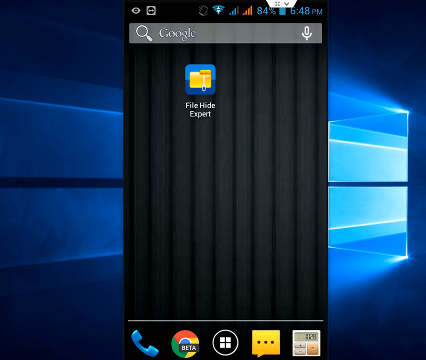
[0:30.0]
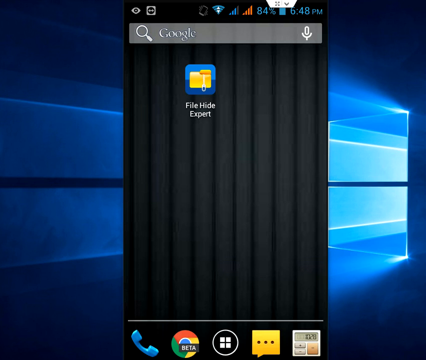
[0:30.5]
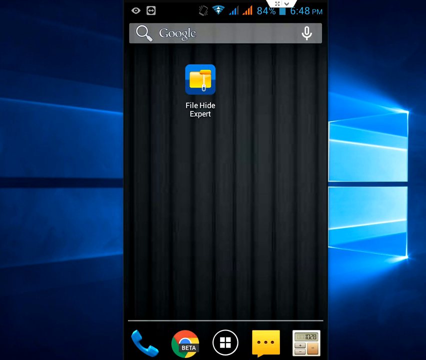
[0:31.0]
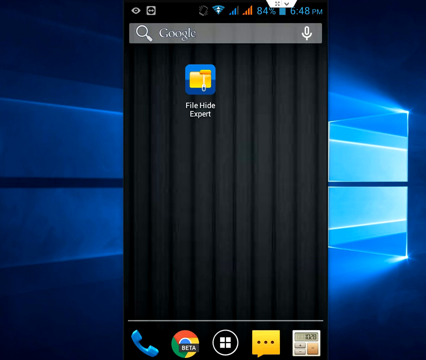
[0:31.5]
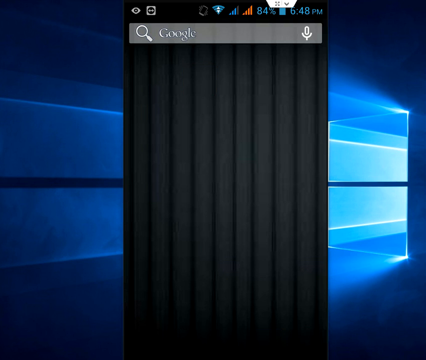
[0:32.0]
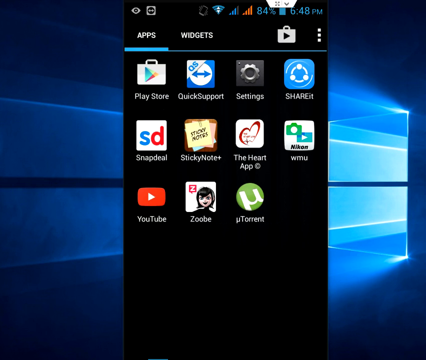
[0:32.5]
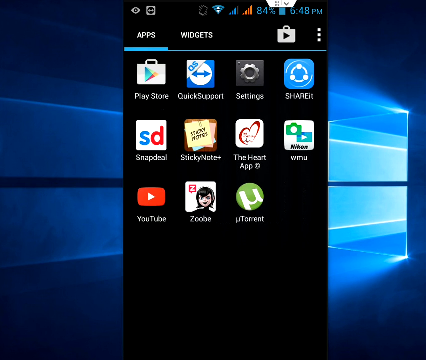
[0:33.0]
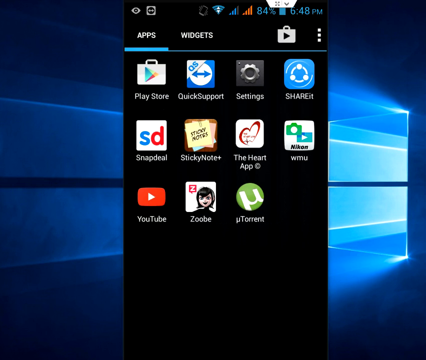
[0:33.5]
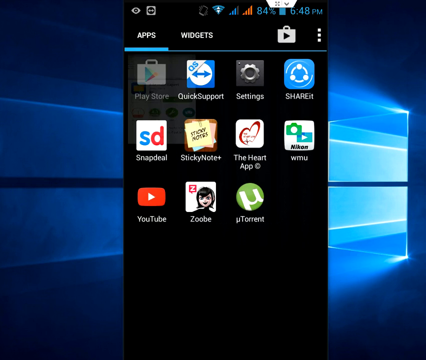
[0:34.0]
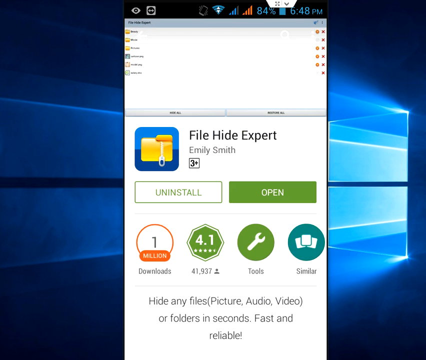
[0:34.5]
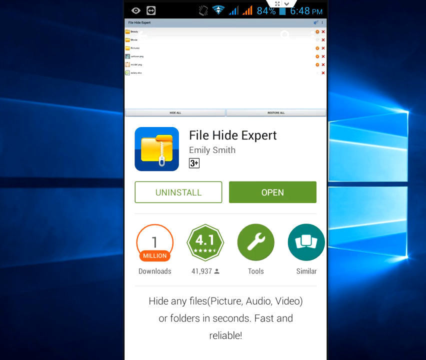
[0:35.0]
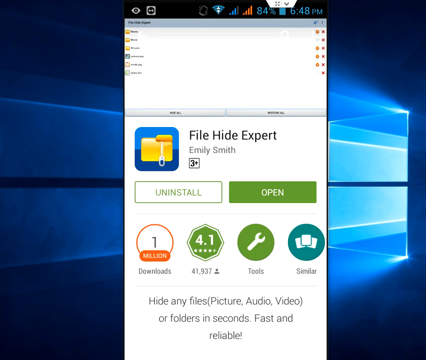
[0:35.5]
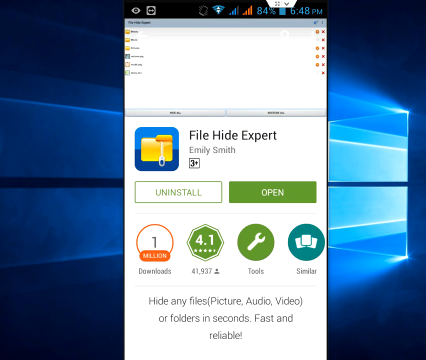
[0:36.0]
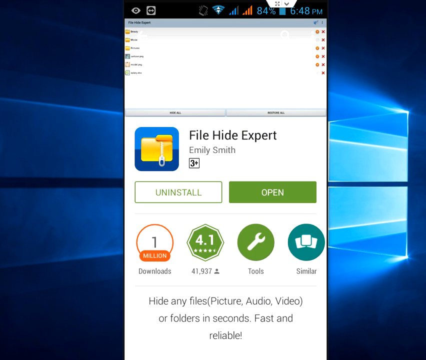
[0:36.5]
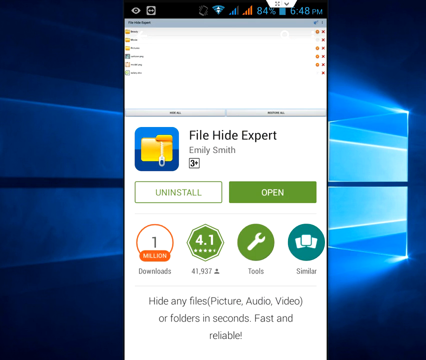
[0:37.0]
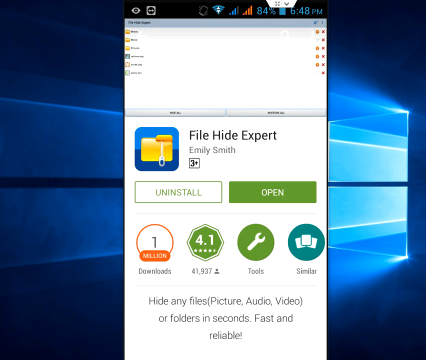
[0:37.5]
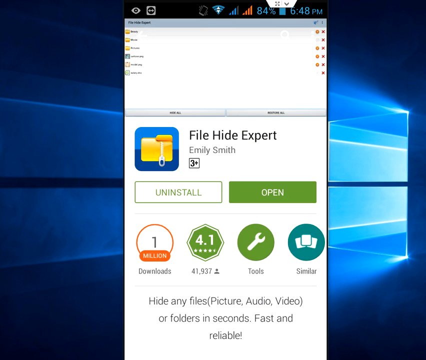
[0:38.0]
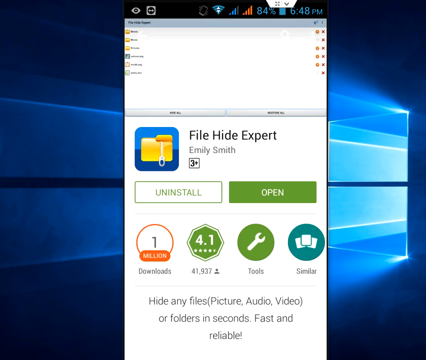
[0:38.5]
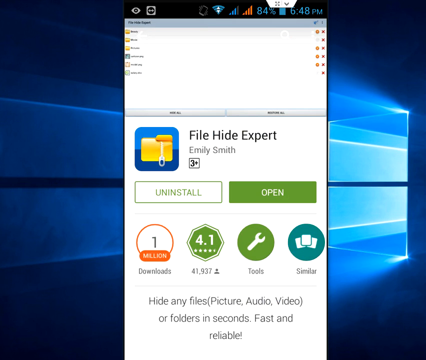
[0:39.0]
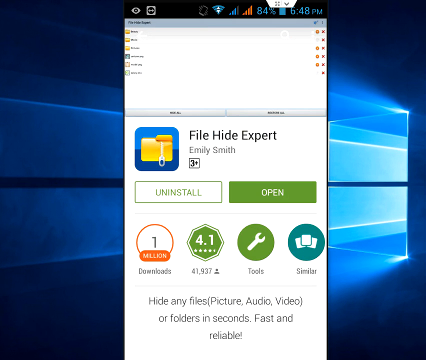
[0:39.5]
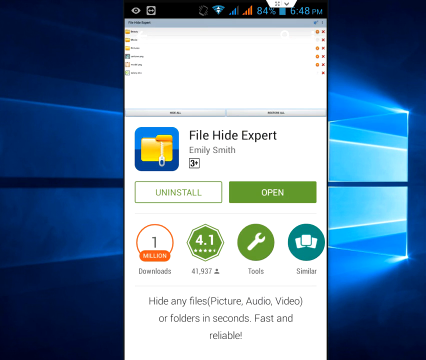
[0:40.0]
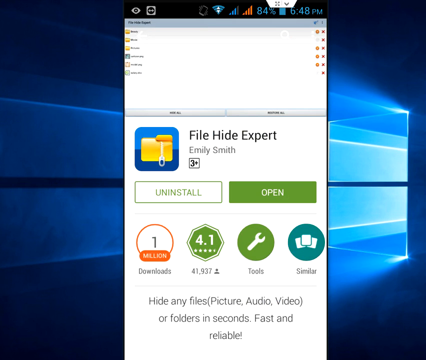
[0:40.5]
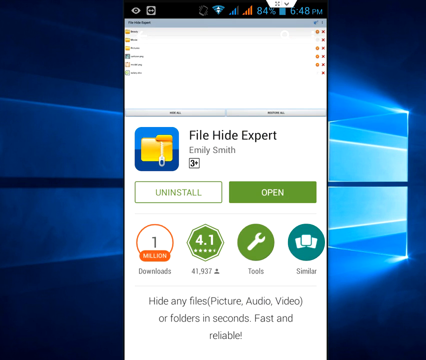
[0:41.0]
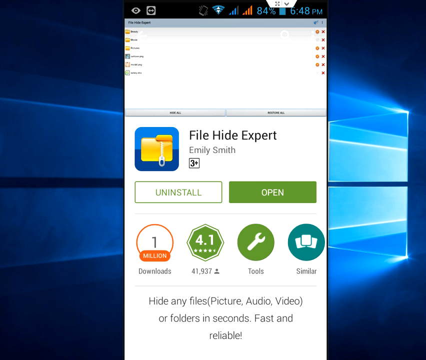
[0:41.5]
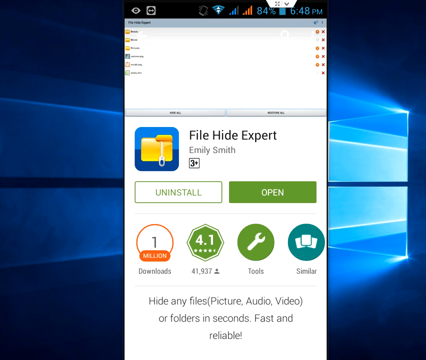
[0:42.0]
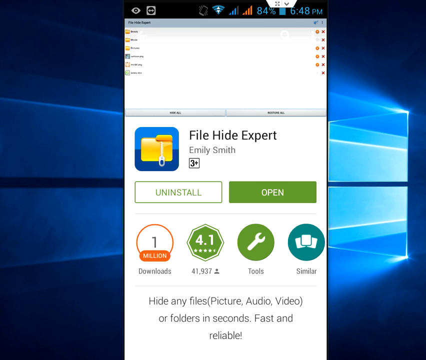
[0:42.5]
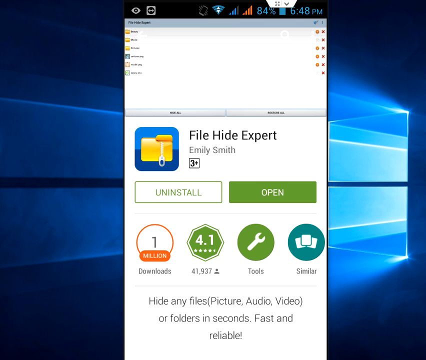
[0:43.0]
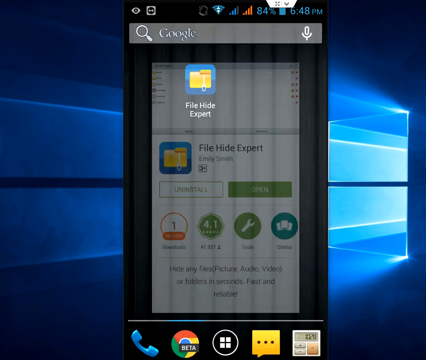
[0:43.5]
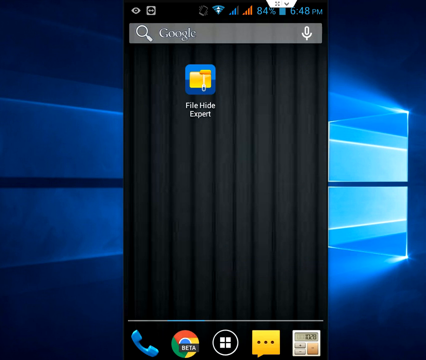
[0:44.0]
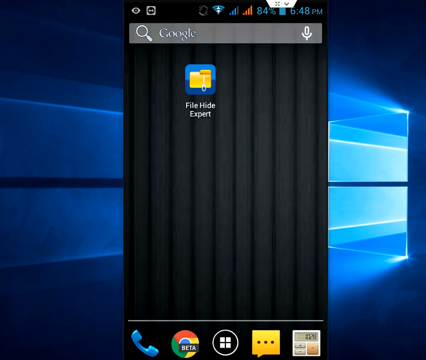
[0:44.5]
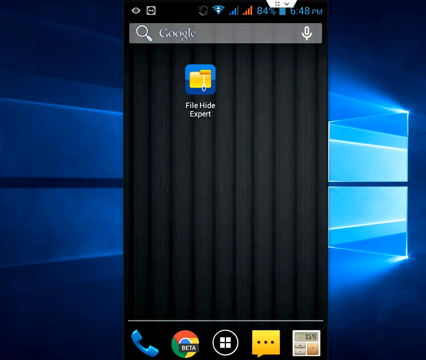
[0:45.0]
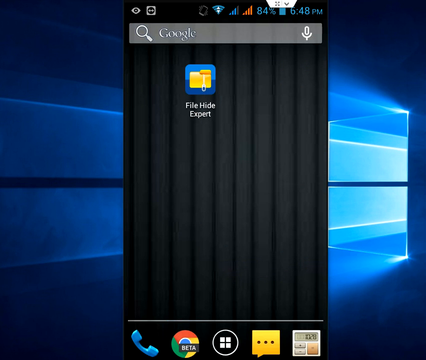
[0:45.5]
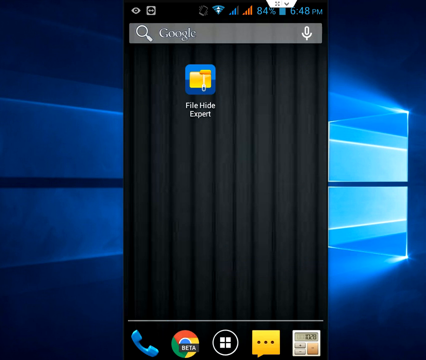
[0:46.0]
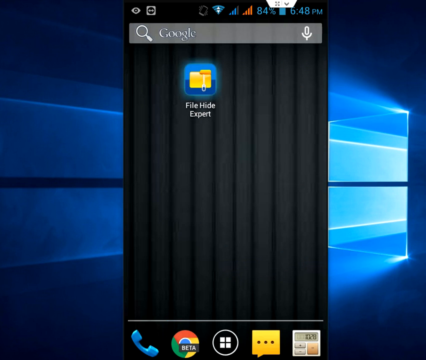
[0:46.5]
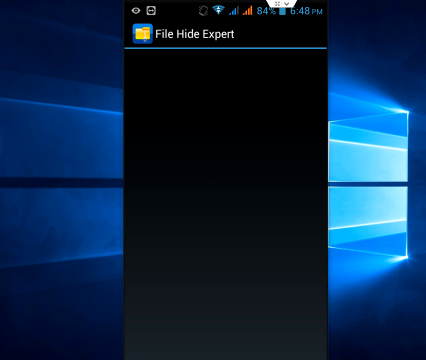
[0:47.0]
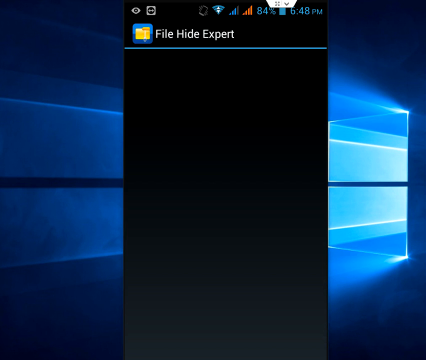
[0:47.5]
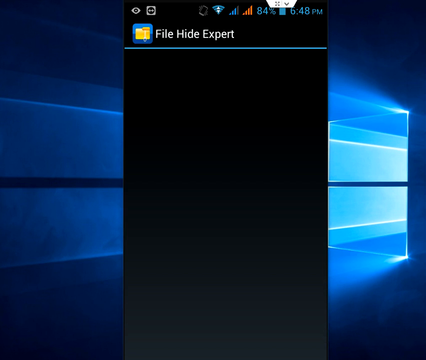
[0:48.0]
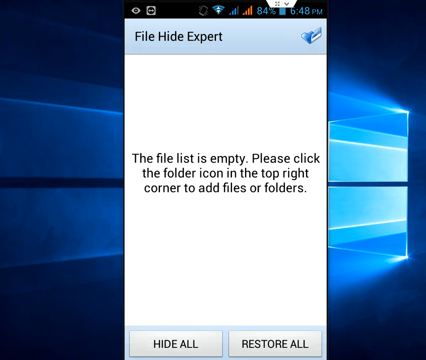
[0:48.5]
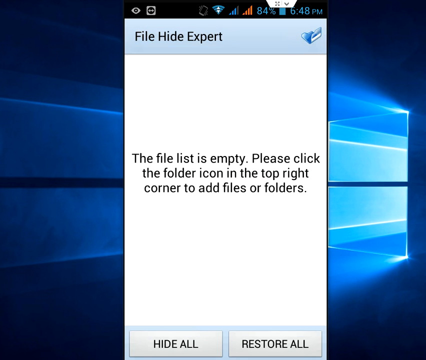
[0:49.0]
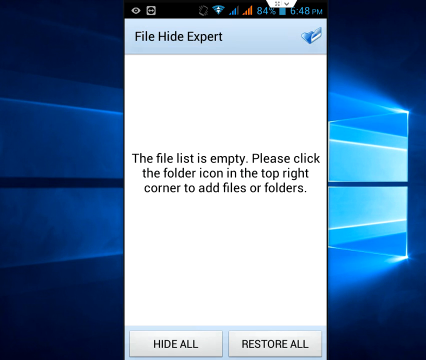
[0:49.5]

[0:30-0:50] The still screen from the mobile phone remains on the Windows desktop. The phone screen zooms into another screen showing 11 app icons. It then moves to a screen with a white background and a file directory at the top, with the File Hide Expert page on the app store shown at the bottom. The video stays on this screen for a couple of seconds before exiting to the screen with just the one icon labeled "File Hide Expert." The phone then opens the File Hide Expert app, which shows "File Hide Expert" at the top with a blank black screen below, before quickly switching to a white screen with centered black text reading "the file list is empty. Please click the folder icon in the top right corner to add files or folders."